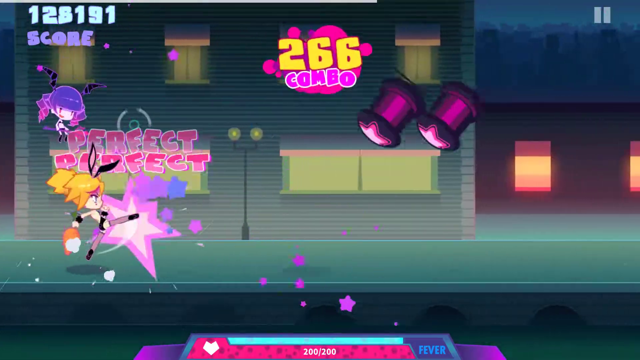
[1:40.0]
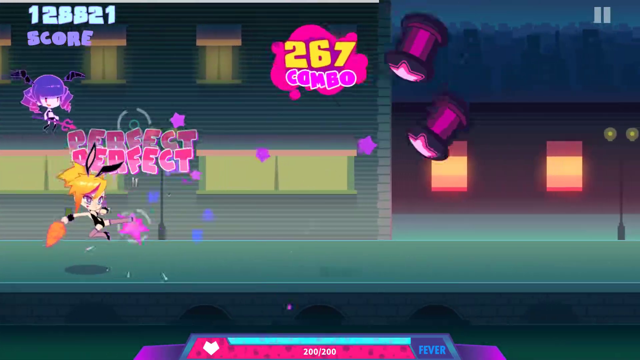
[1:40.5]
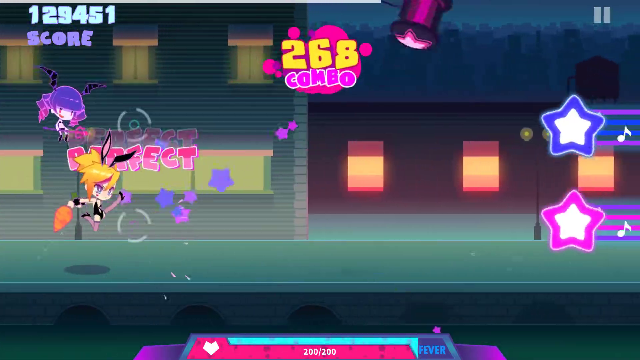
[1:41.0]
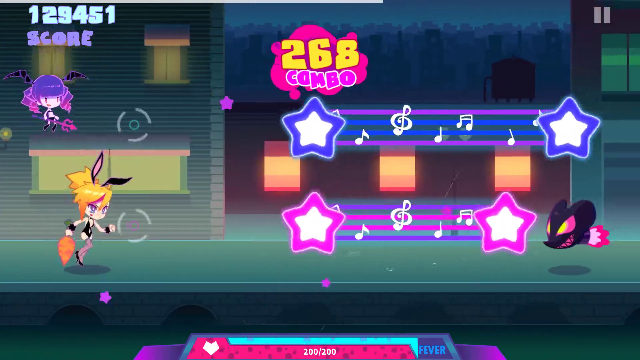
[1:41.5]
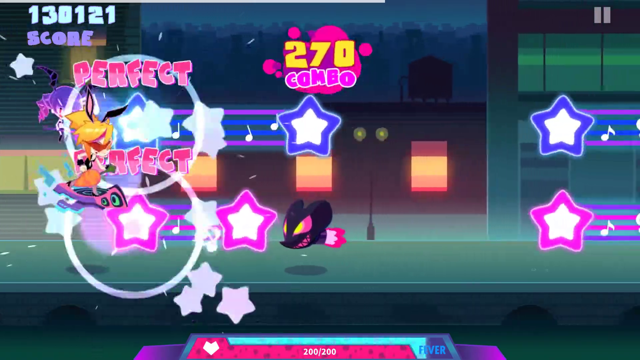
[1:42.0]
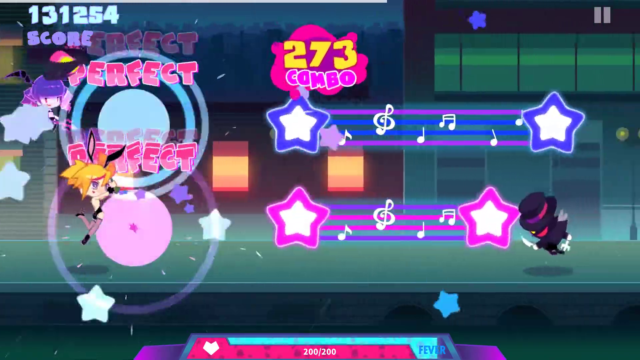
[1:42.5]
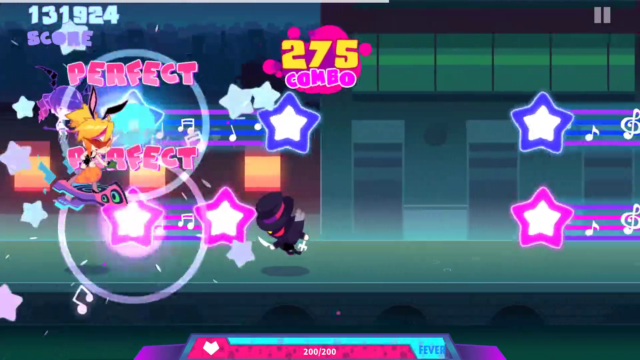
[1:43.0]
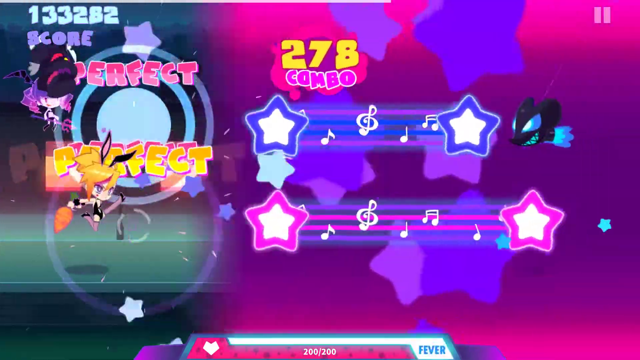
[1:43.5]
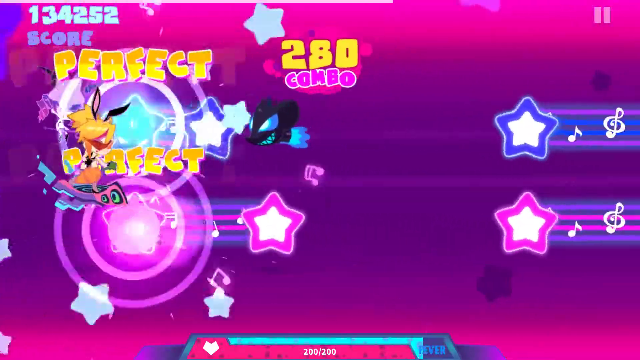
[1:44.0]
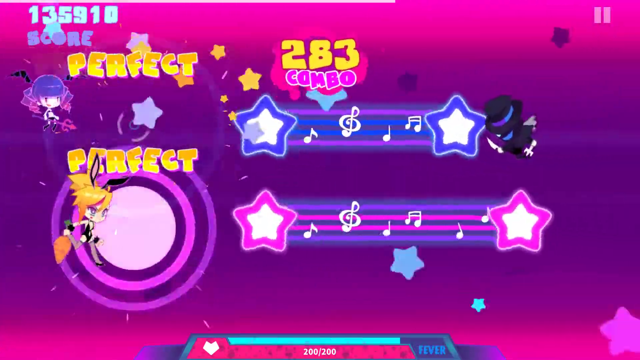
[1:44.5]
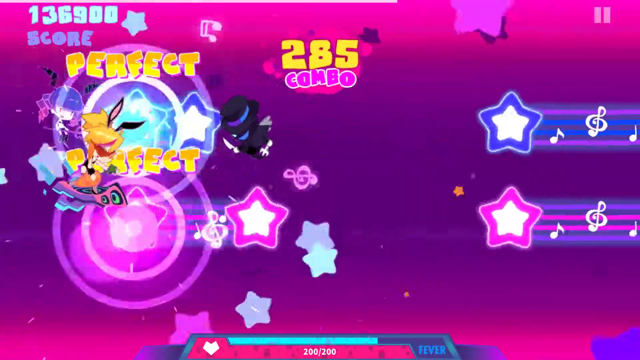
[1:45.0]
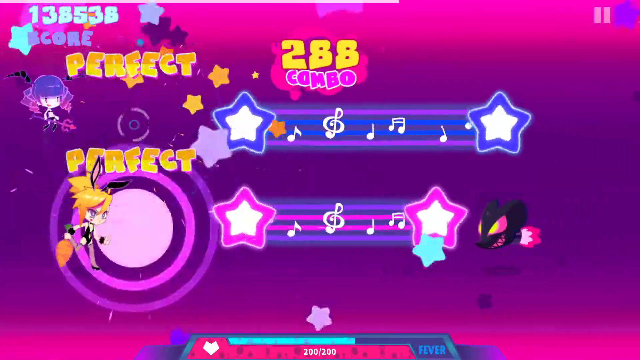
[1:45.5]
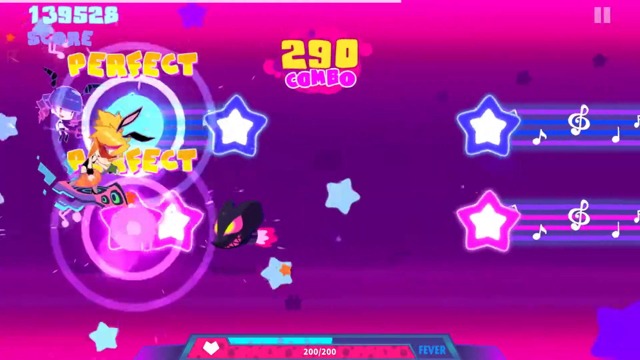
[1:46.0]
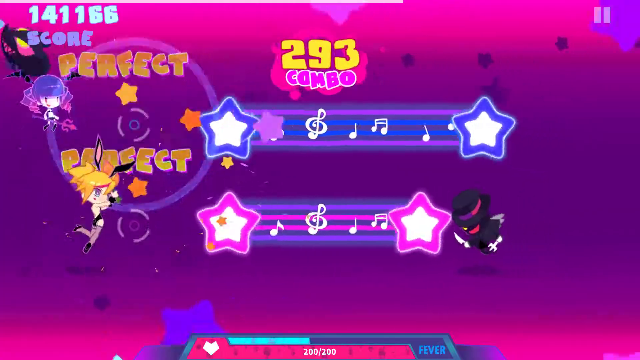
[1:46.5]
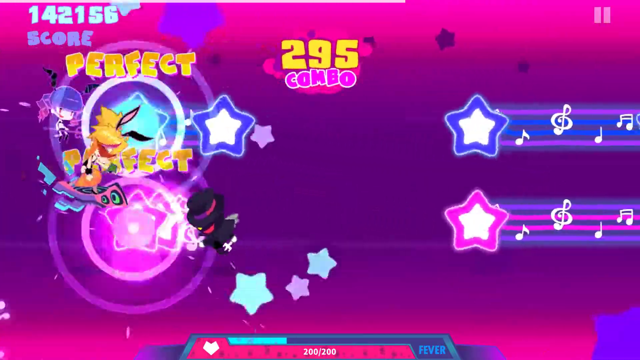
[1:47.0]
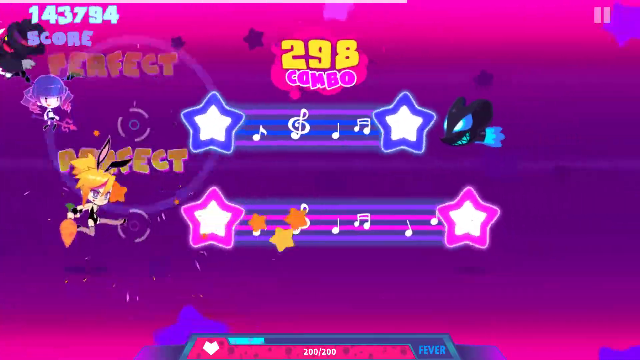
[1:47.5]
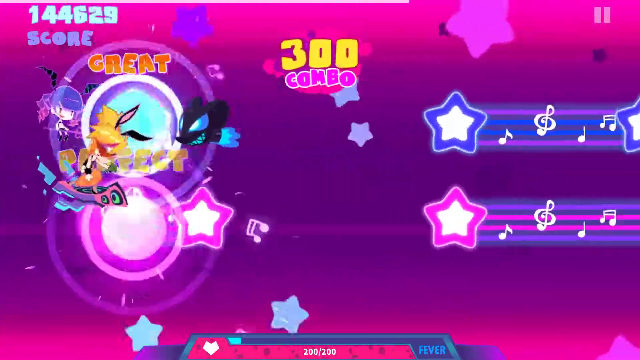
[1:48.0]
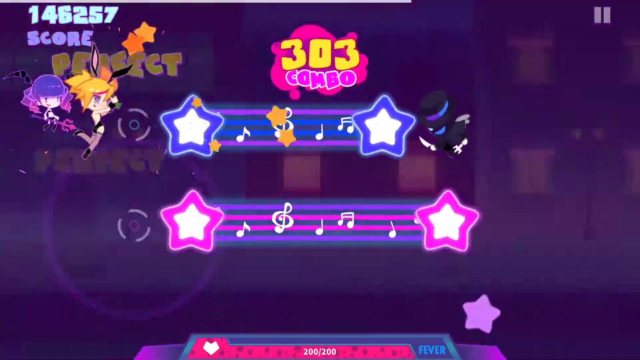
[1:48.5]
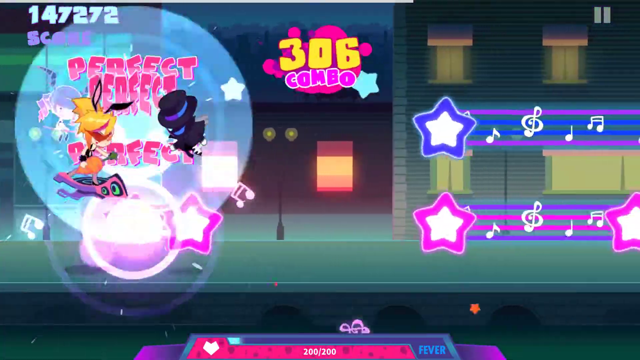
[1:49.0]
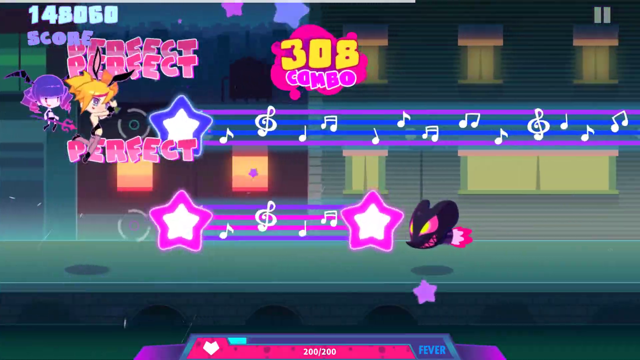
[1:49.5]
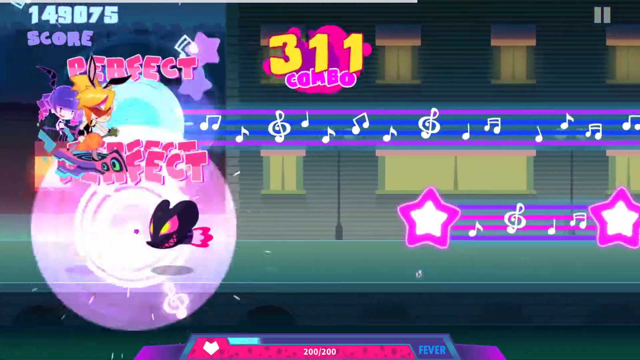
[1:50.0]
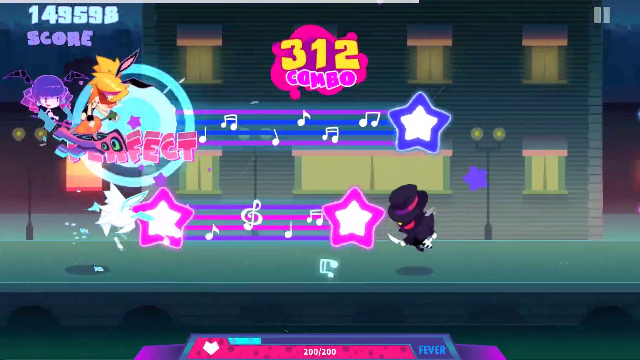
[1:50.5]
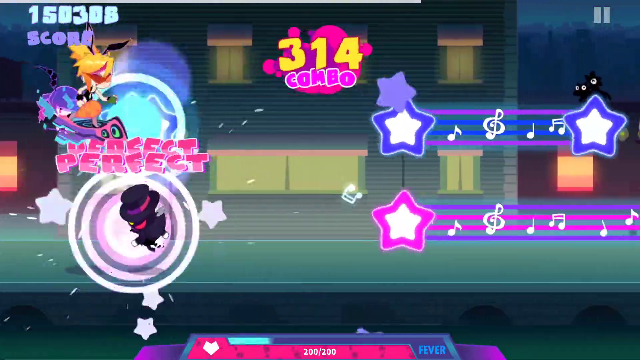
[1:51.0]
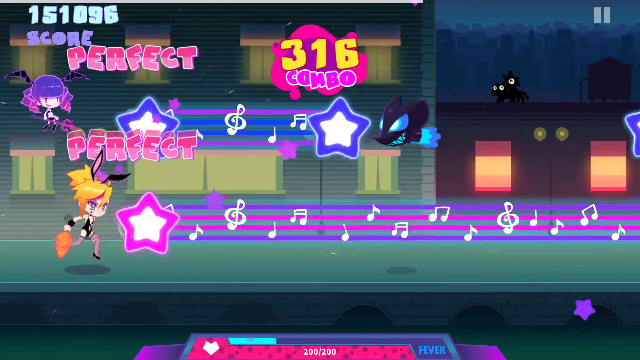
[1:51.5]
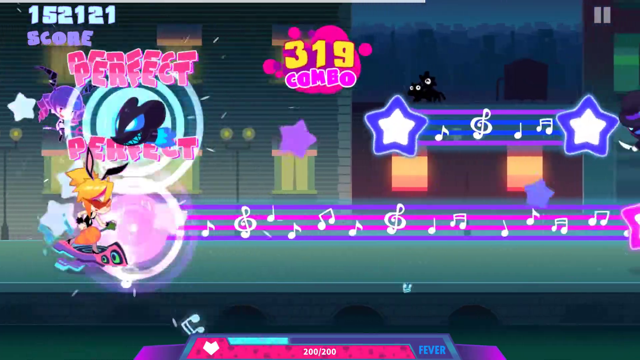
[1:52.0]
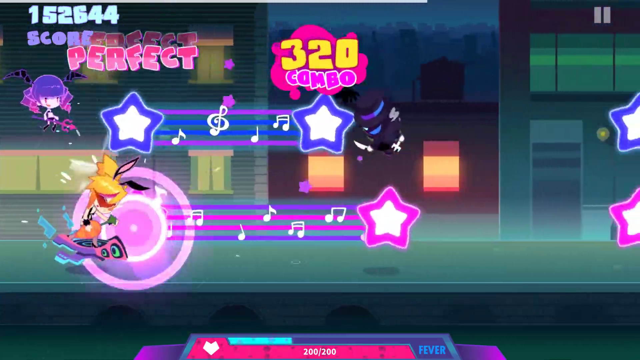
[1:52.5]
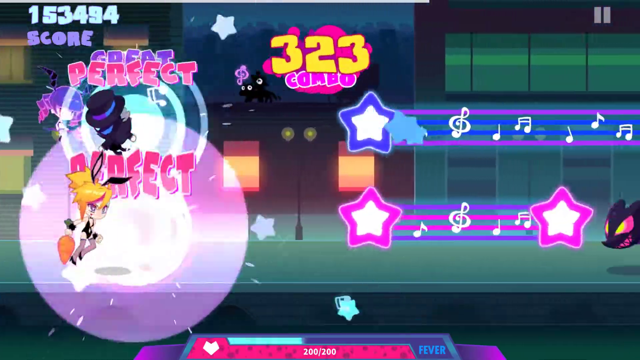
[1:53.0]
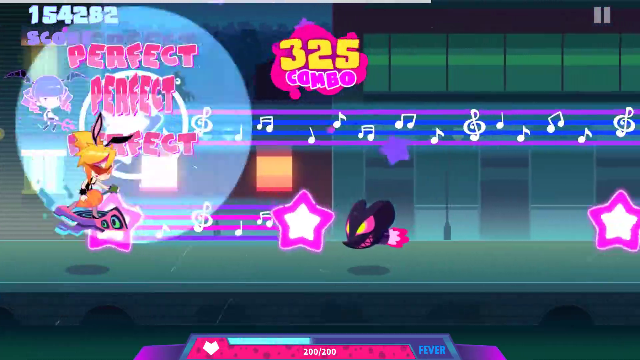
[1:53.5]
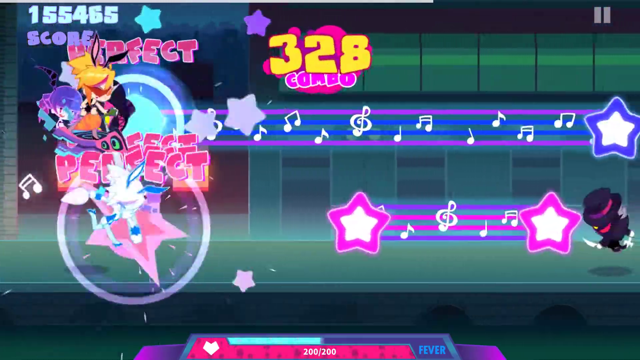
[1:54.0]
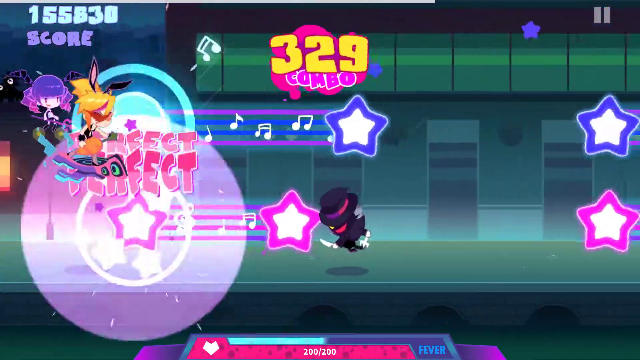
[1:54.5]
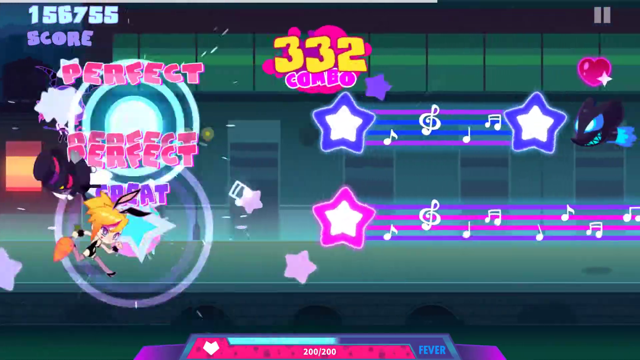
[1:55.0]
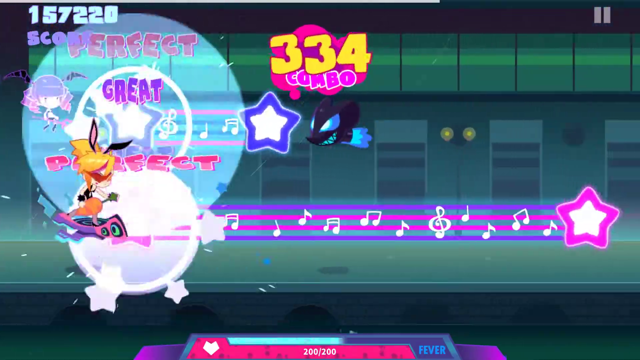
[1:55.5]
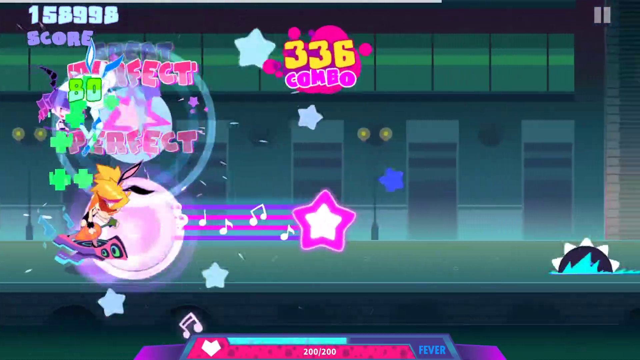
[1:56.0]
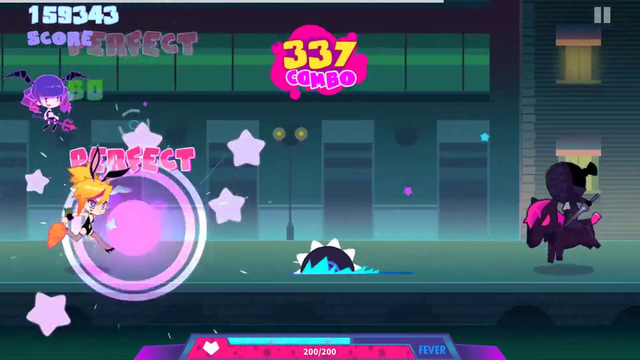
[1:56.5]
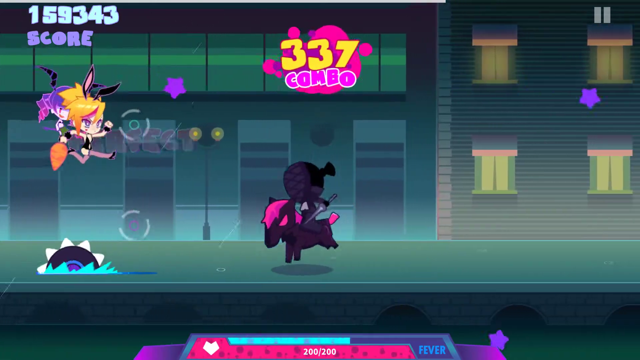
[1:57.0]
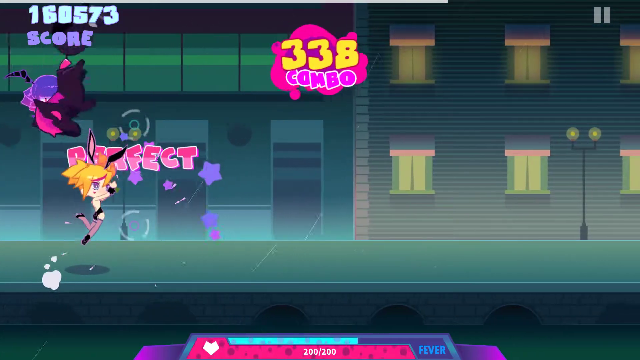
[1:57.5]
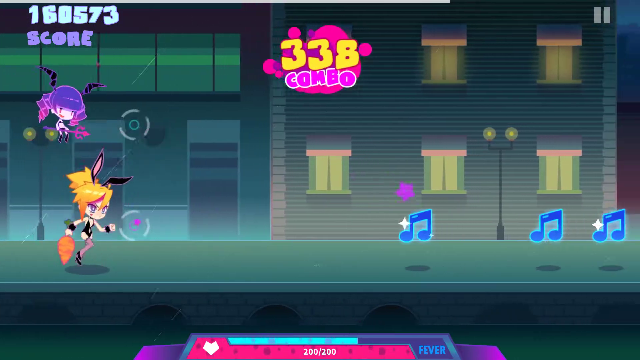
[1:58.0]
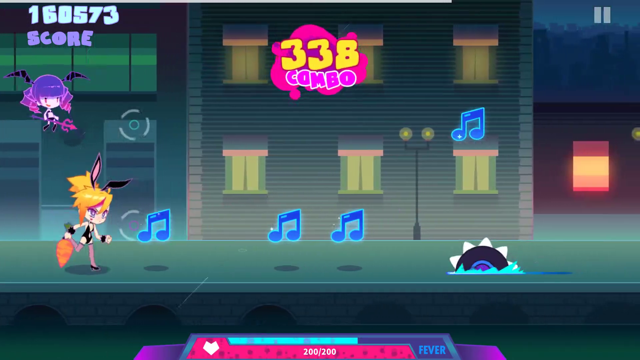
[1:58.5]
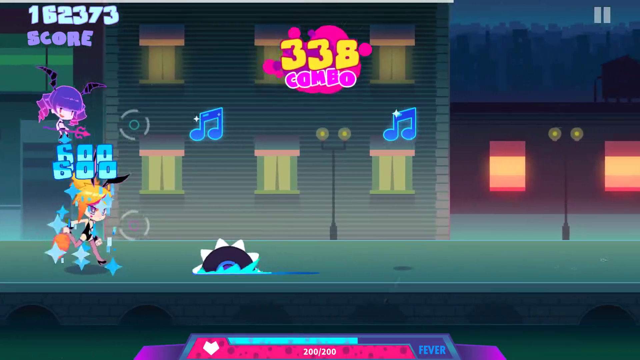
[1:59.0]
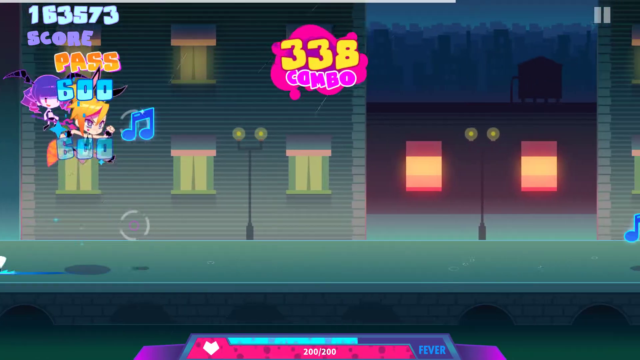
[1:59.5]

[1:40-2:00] The video game follows a woman anime character wearing black bunny ears and a tight black outfit that covers only her chest, along with stockings and black high heels. She runs on a sidewalk beyond a street, and different-sized buildings line the side of the sidewalk: one with five windows and two big windows, a shorter building with three lit-up orange windows, and a green building with three or four doors. As she runs, objects come at her and she tries to catch them: little mouse-head objects, blue stars and purple stars. Every time she catches one, the word "perfect" appears above her in pink. Blue music signs then come at her, and she catches them.